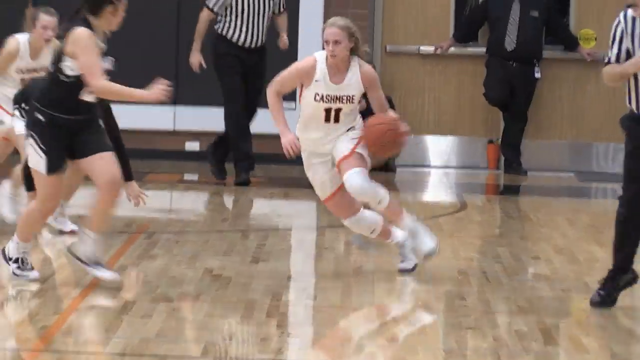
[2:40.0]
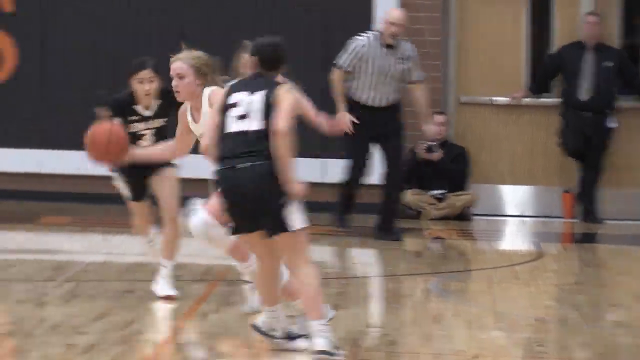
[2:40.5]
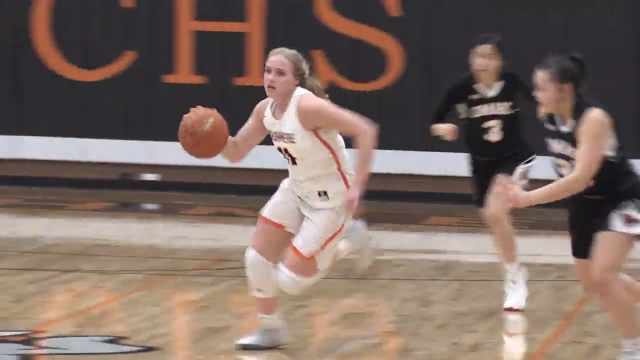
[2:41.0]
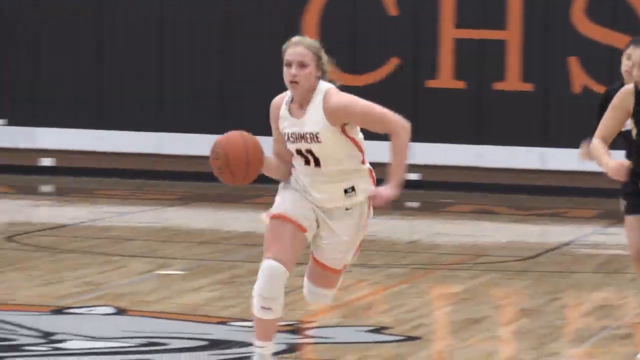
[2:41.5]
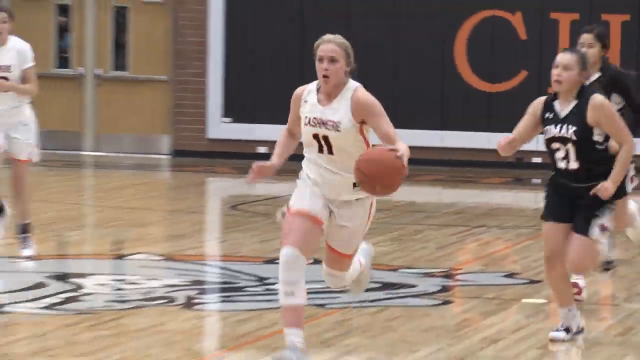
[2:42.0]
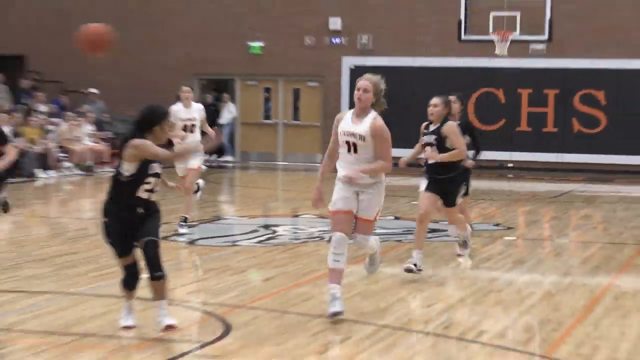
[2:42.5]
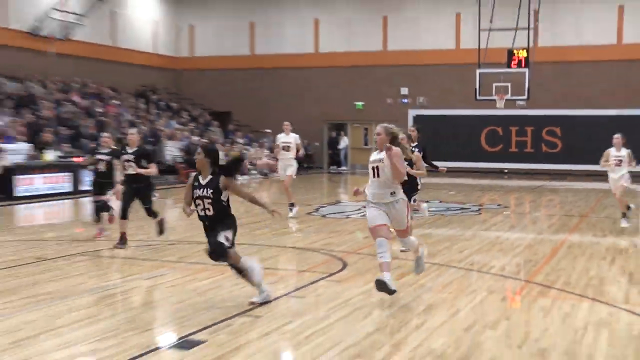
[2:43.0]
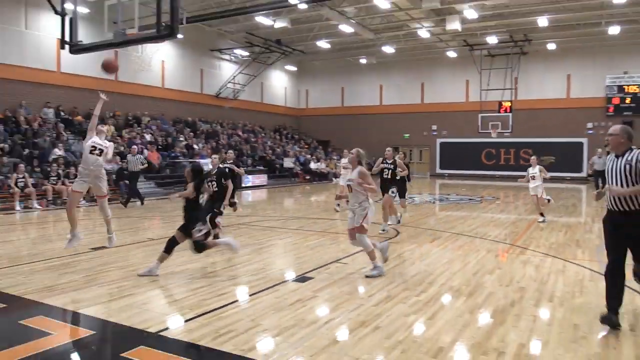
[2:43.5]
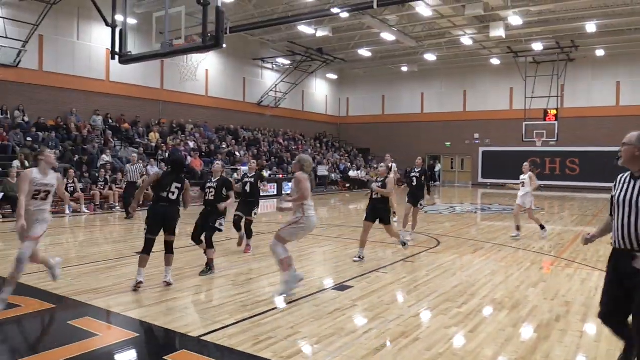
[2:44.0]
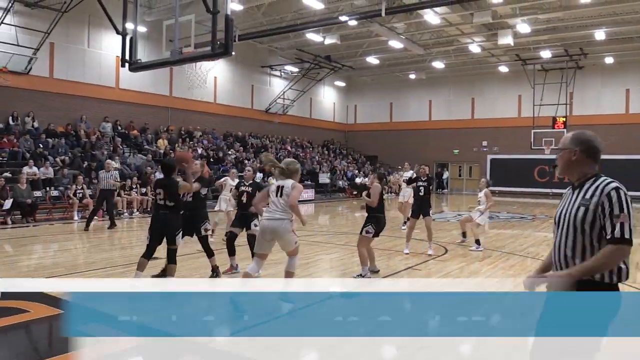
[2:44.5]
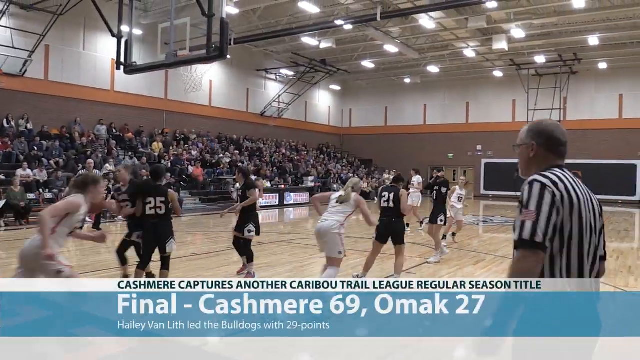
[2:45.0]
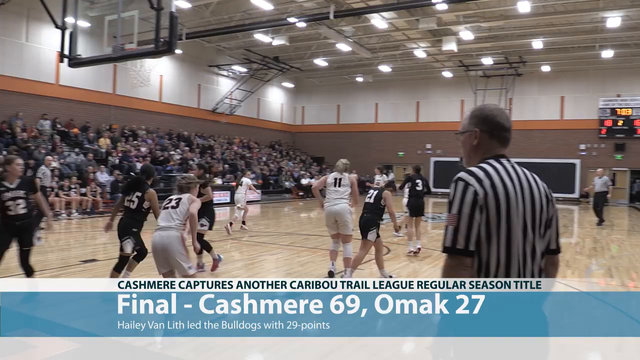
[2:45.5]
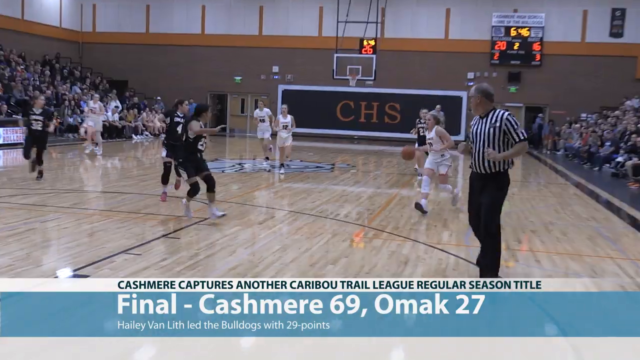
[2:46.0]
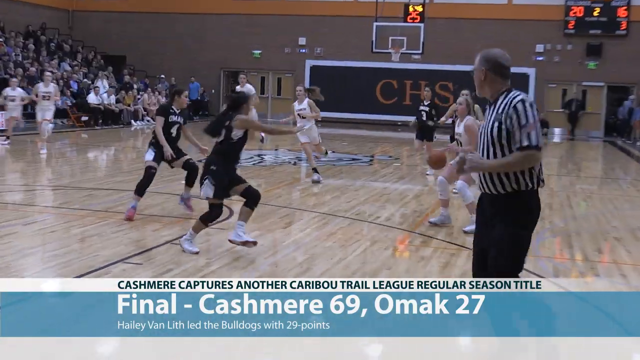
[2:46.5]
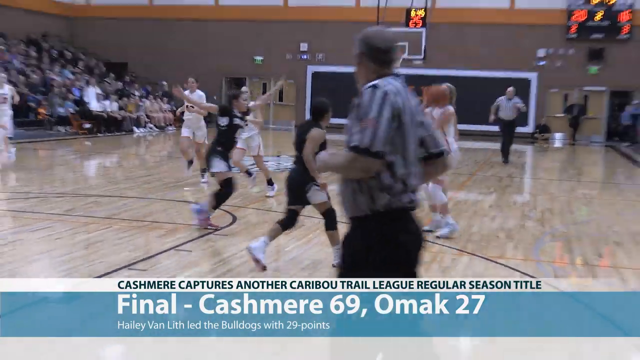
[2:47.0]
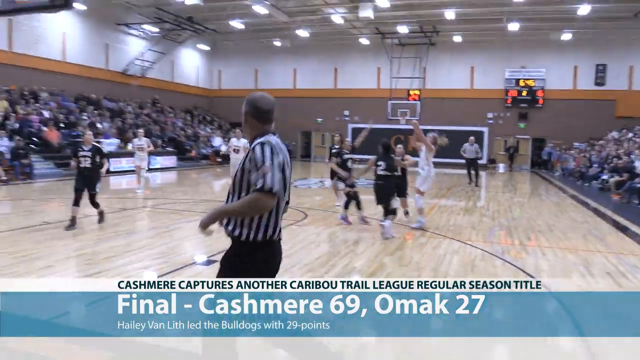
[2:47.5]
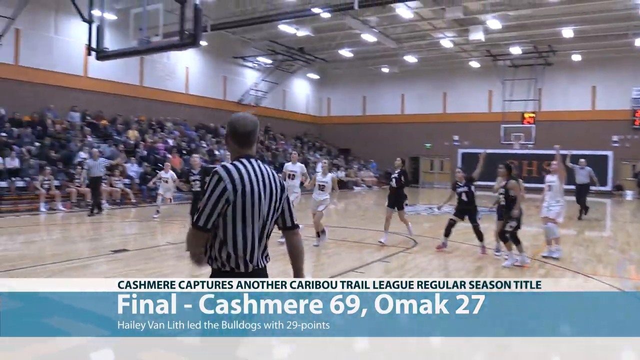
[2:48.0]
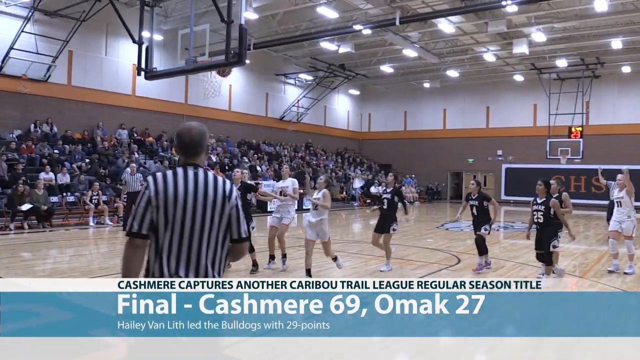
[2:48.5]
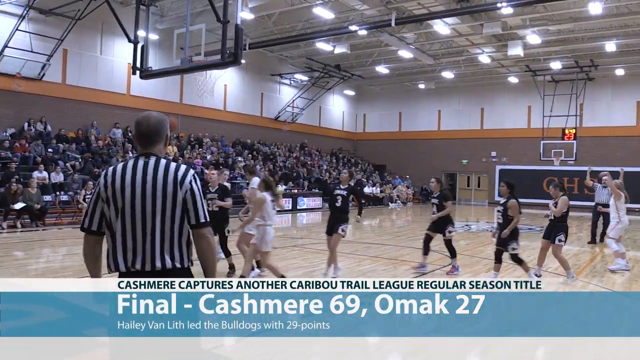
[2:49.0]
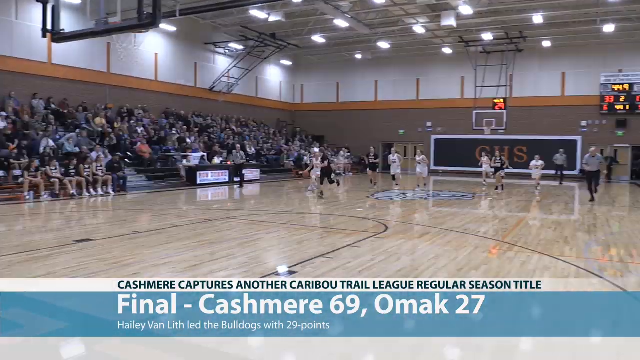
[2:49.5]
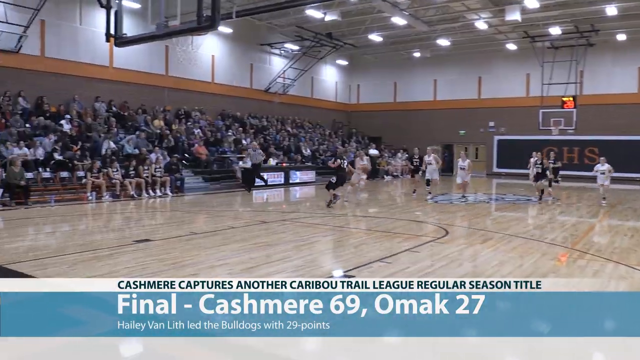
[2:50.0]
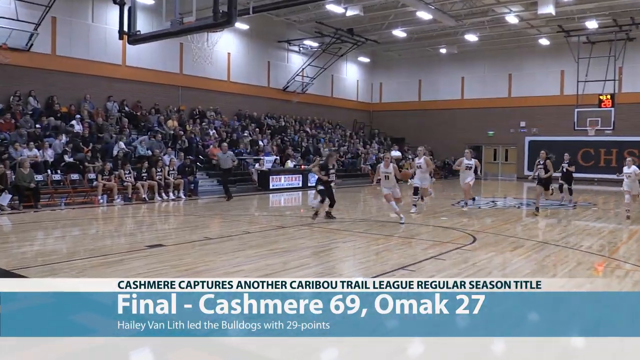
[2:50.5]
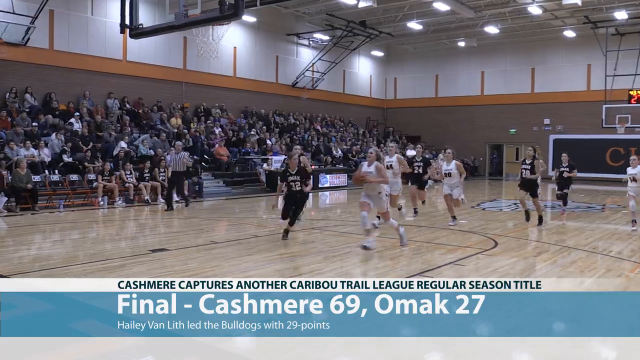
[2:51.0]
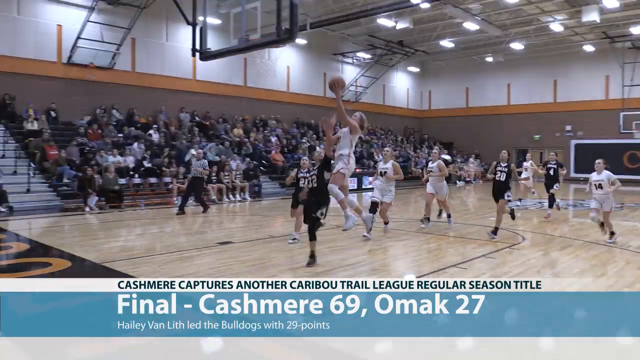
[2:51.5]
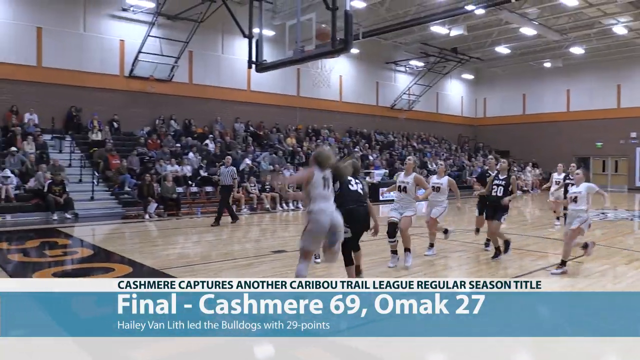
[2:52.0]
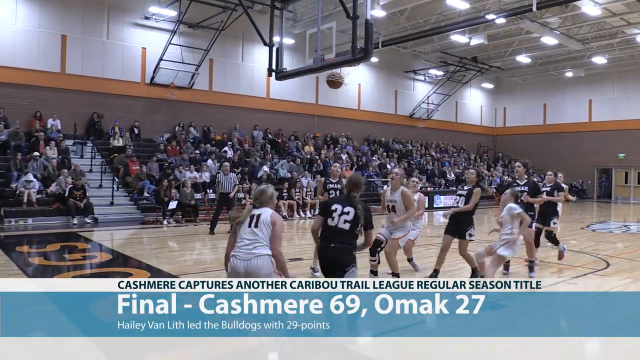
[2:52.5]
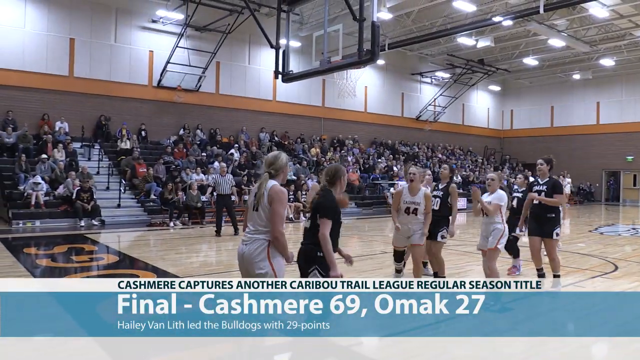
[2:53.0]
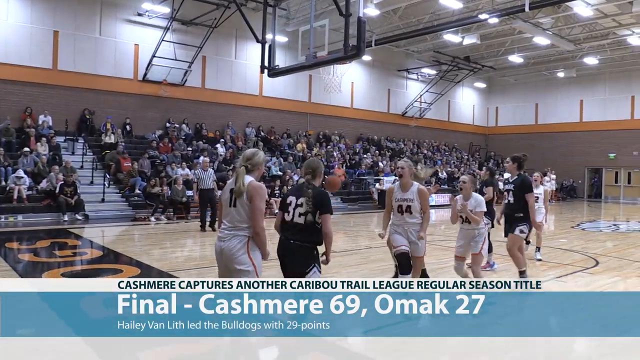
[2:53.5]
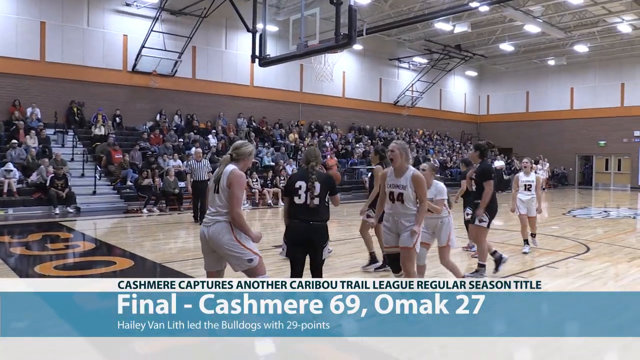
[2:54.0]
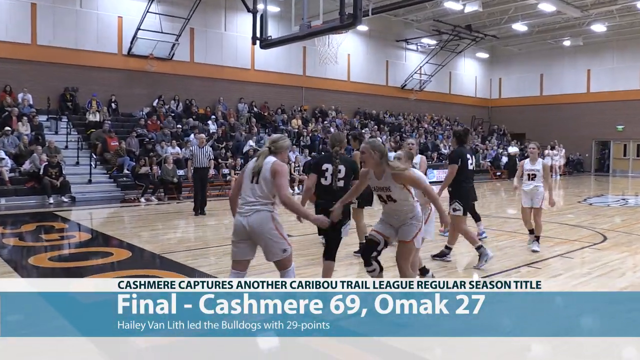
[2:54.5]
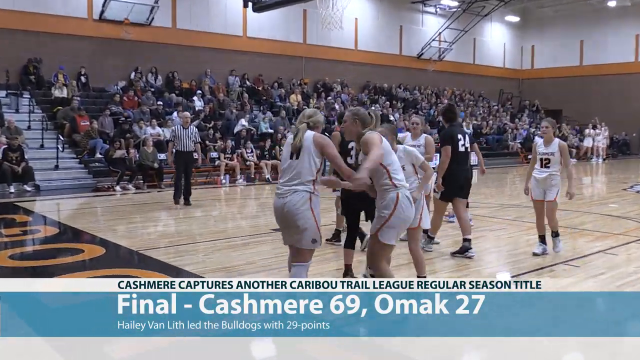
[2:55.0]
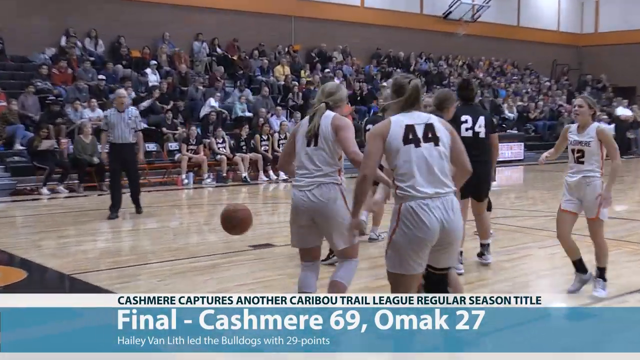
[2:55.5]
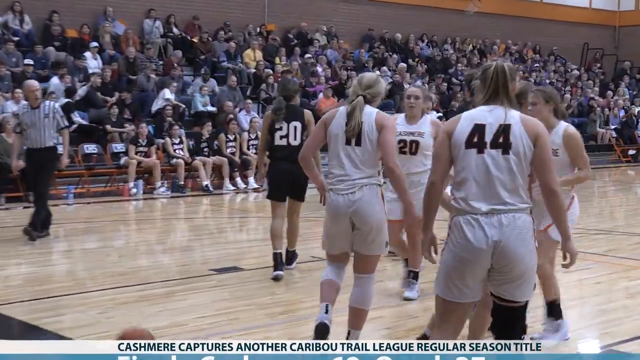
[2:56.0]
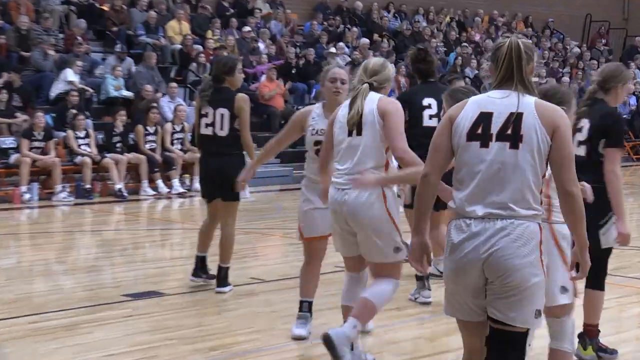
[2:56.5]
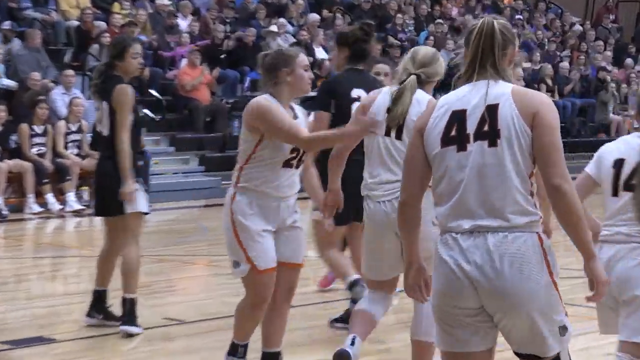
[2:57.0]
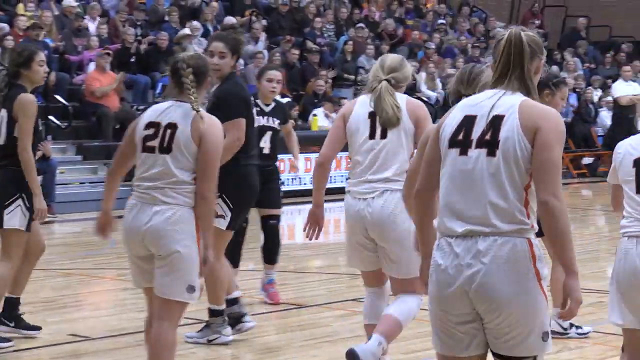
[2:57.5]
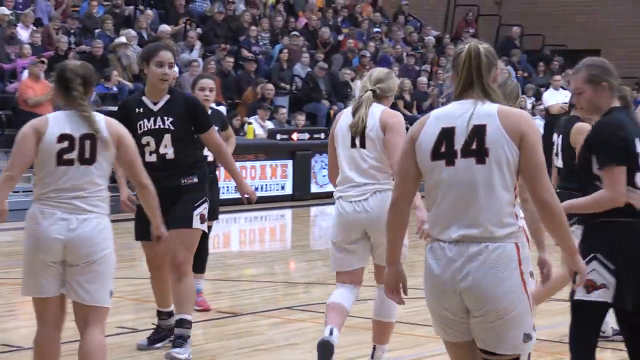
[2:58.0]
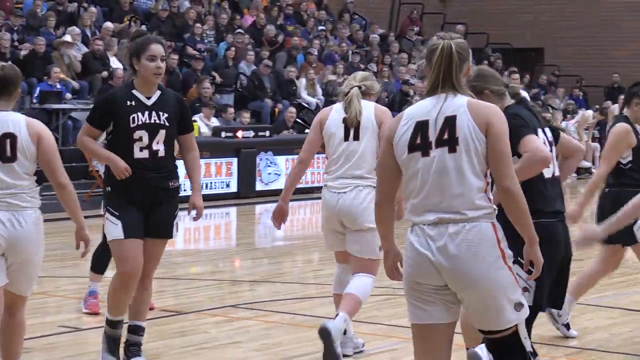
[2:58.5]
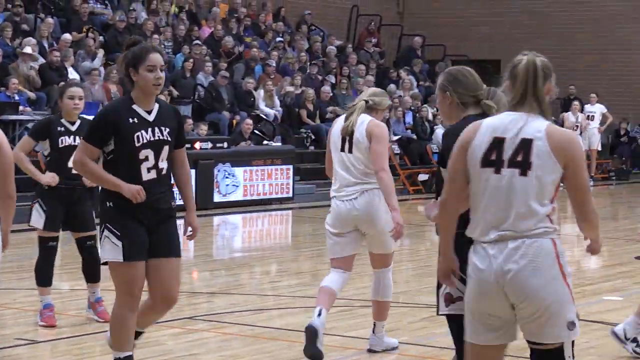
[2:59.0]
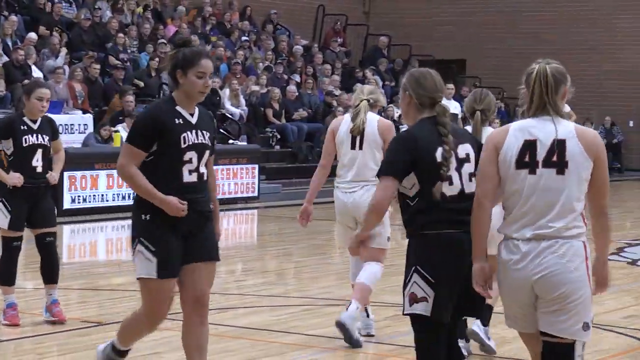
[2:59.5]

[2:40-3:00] Number 11 on the white team, having just stolen the ball, dribbles toward the center of the court, getting closer, and makes a no-look pass to a teammate, who makes a layup. The black team grabs the ball and takes it to the baseline. Another angle shows a different part of the game, where the same number, apparently 11, catches the ball on the wing for a three-point shot that goes up and in. A player from the white team, number 11, then comes down the center of the court dribbling, puts the ball up with her left hand and scores. She kind of flexes for a second, and her teammates come over to give her low fives and pat her on the back as she goes to the free throw line, as it looks like she was also fouled on the play.